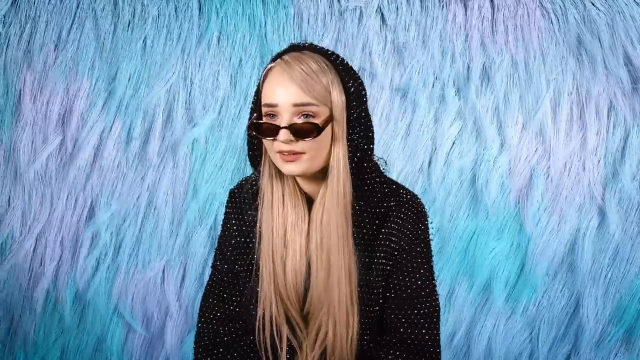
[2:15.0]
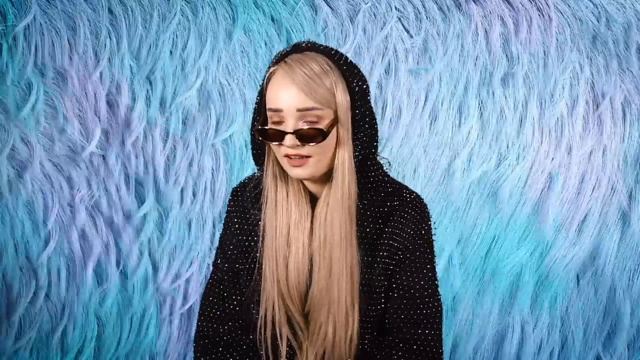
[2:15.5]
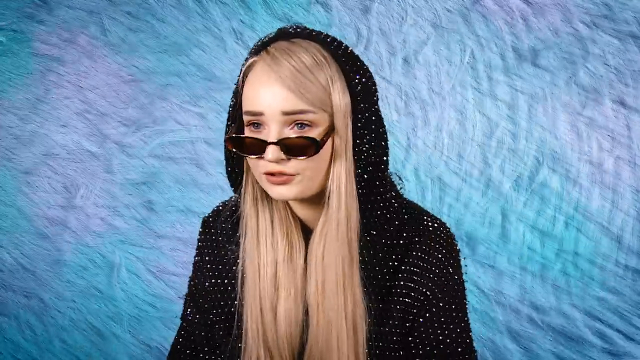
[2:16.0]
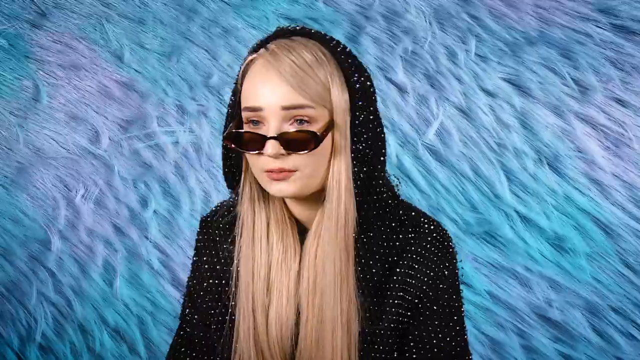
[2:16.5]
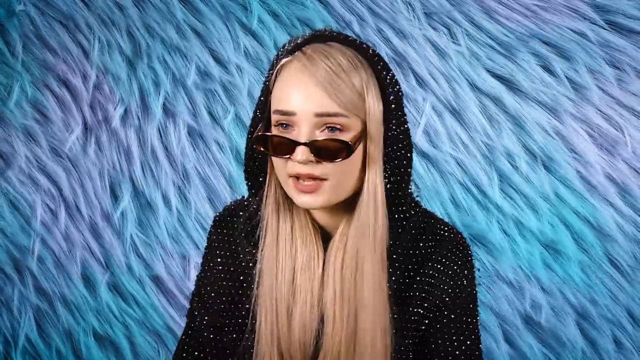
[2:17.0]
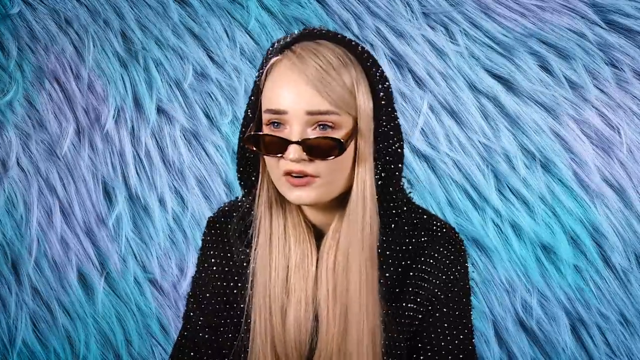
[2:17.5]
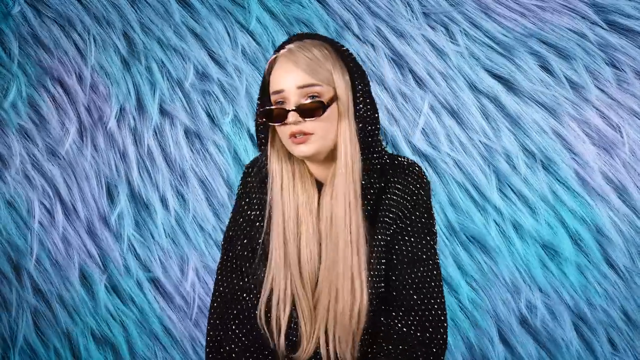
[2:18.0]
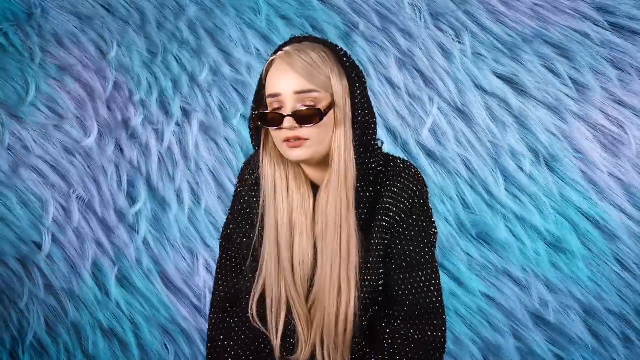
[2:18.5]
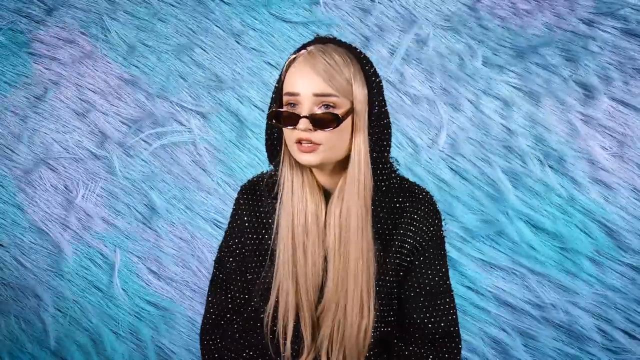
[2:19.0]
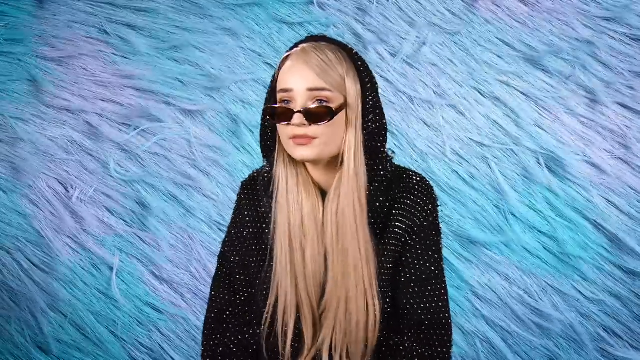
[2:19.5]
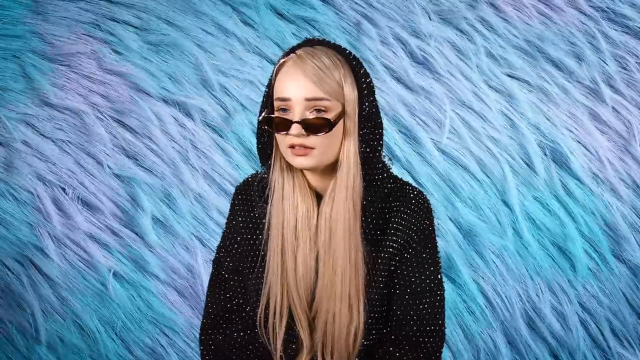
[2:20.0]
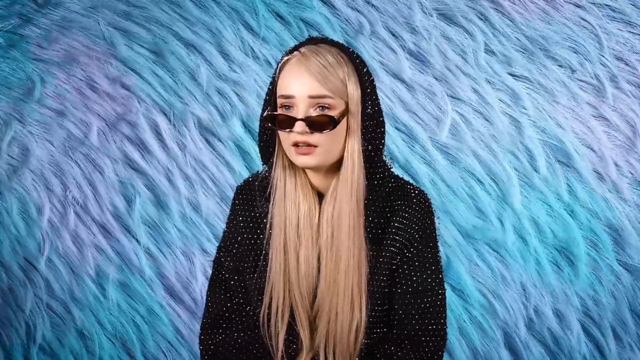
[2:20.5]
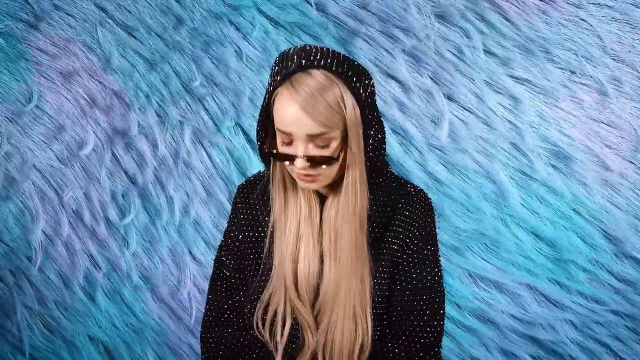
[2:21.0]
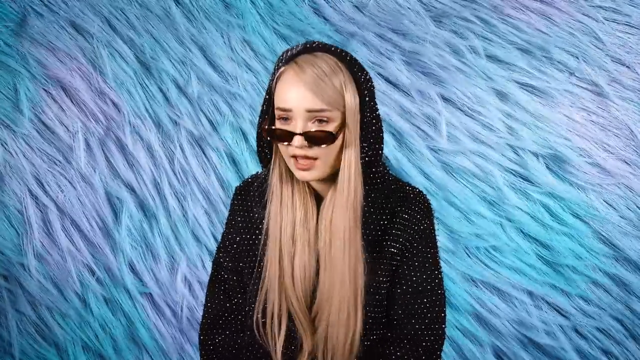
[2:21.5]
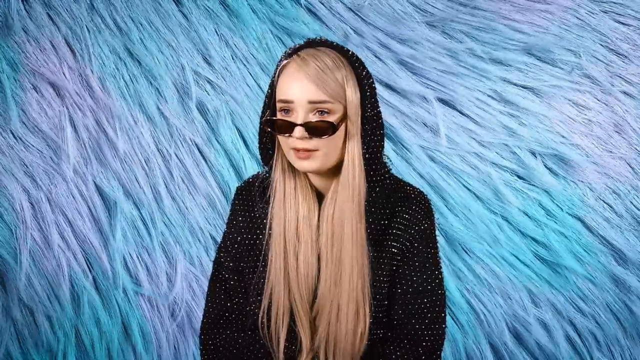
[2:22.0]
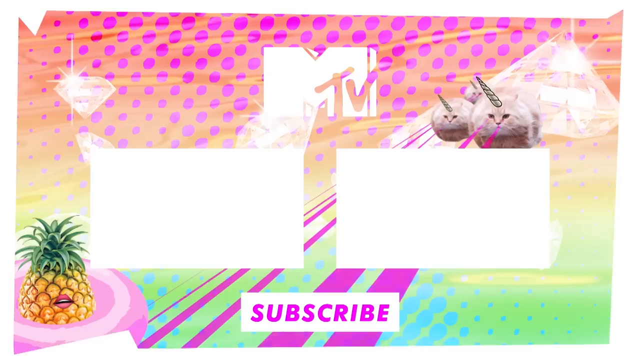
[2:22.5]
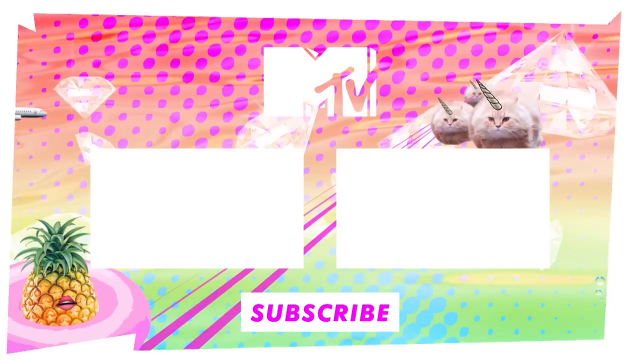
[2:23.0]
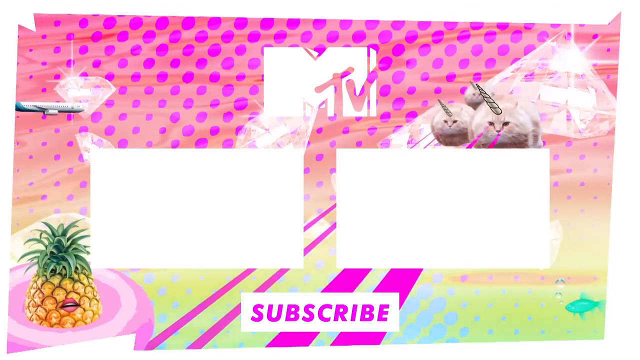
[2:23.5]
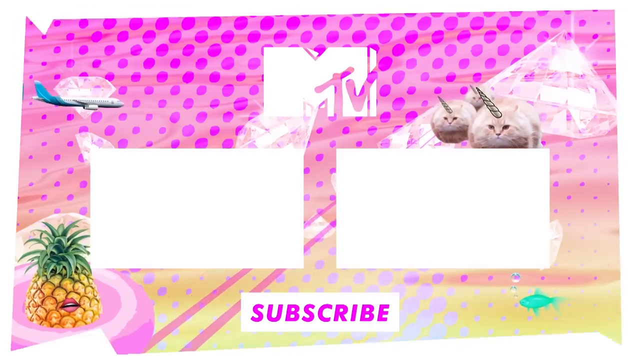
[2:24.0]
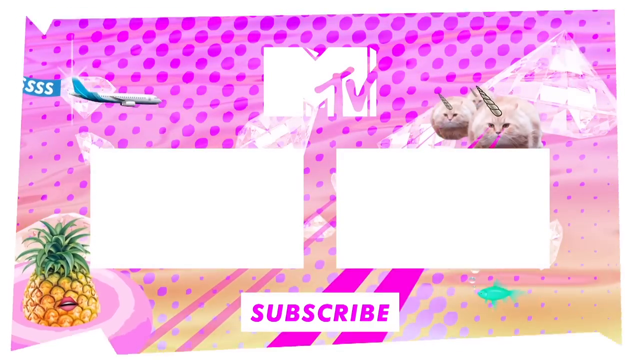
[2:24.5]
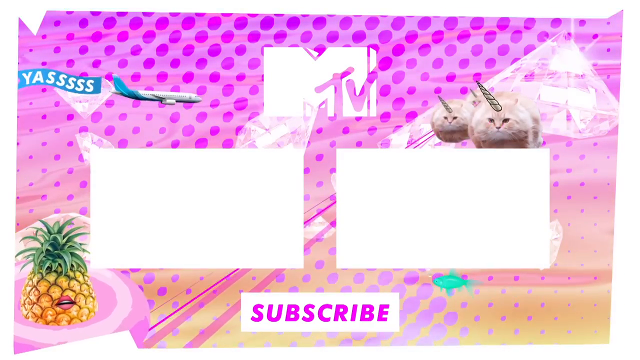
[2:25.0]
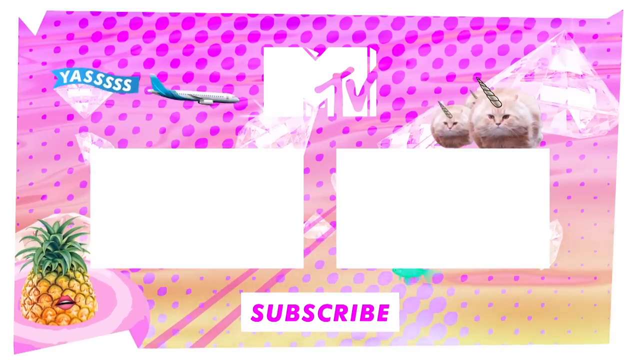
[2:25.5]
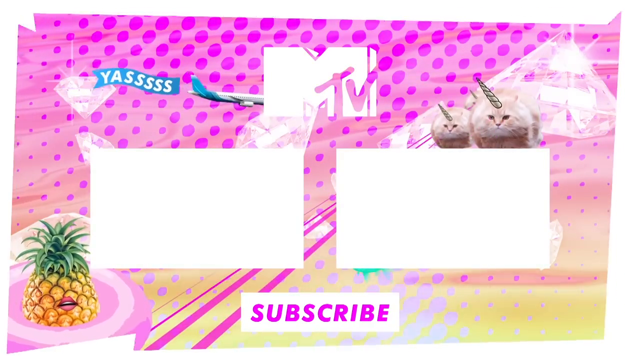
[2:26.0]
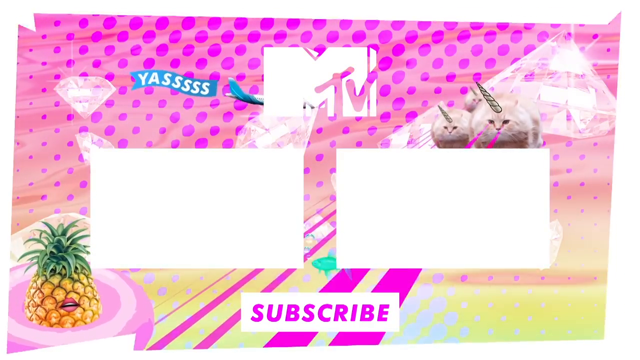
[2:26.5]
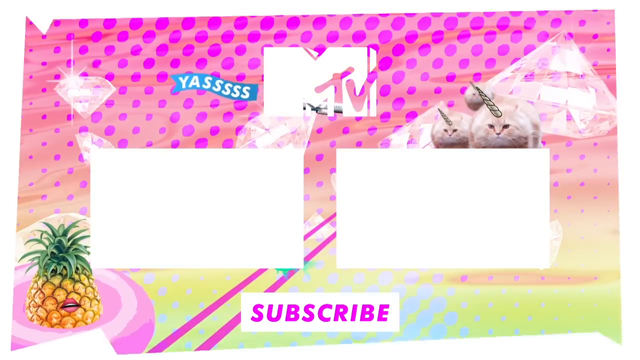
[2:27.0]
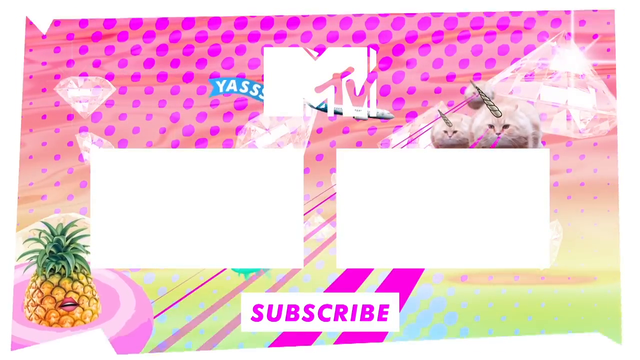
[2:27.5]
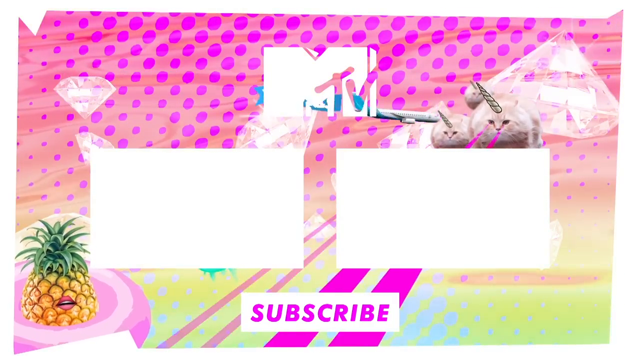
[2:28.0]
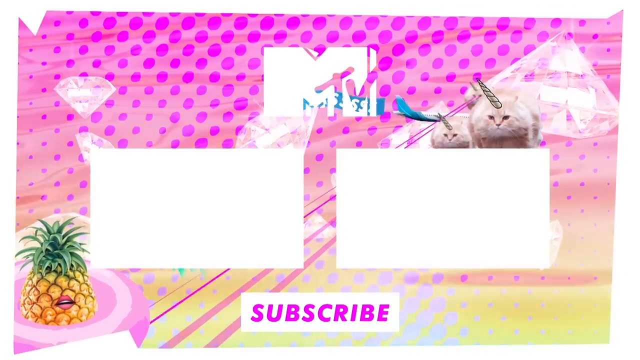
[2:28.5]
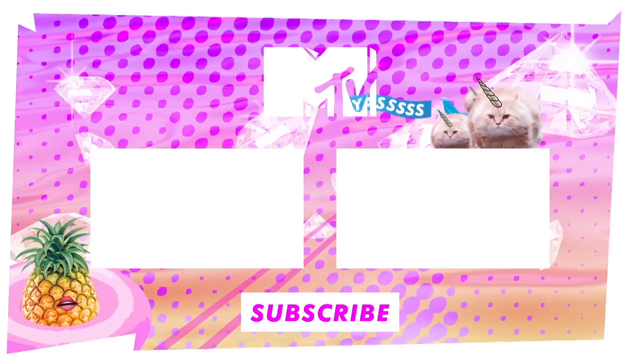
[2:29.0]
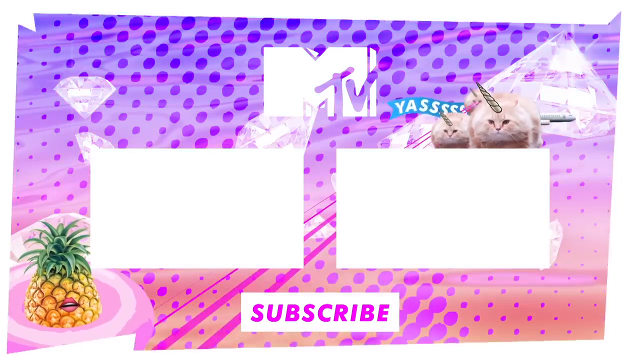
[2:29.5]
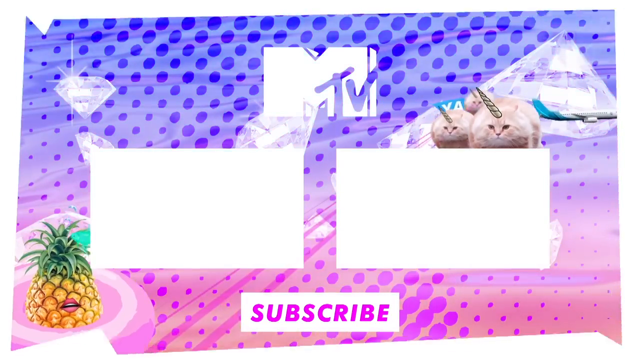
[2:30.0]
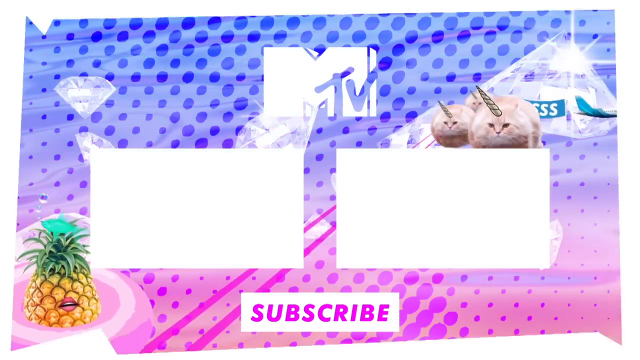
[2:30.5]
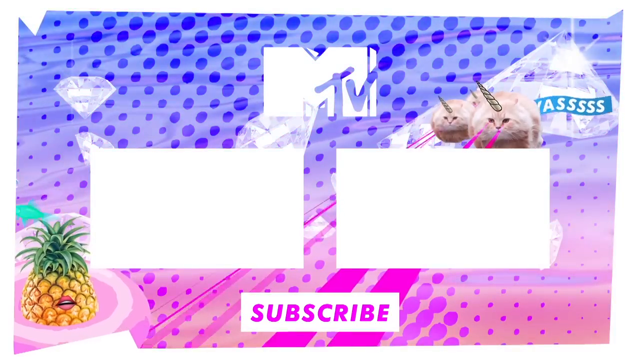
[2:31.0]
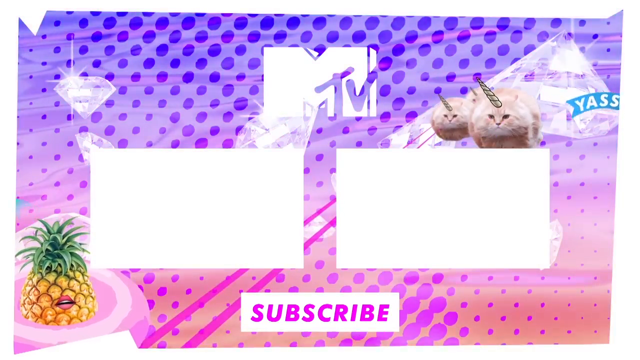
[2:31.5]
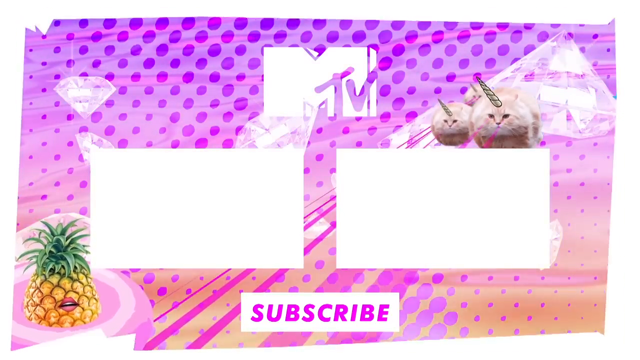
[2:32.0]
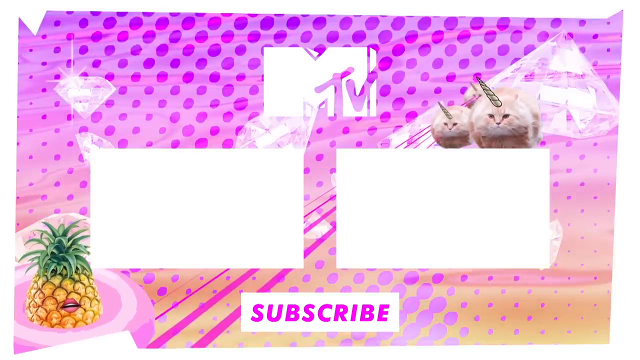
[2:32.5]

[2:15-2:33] One person sits on a chair, with long blonde hair parted to their left (the viewer's right), wearing brown sunglasses and a black hoodie with sparkly sequins, the hood pulled up. The background is light blue and light purple artificial fur blowing around as if wind is blowing on it. The person talks, occasionally looking down, and the camera occasionally cuts to a shot slightly zoomed in on their face. At the end, after the shot of the person, there is a colorful animated background in pink, purple, orange and blue with a pineapple, cats, and a plane flying through with a banner that says "YASSSSS".